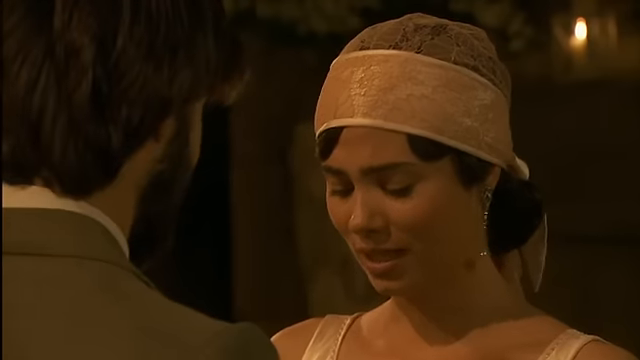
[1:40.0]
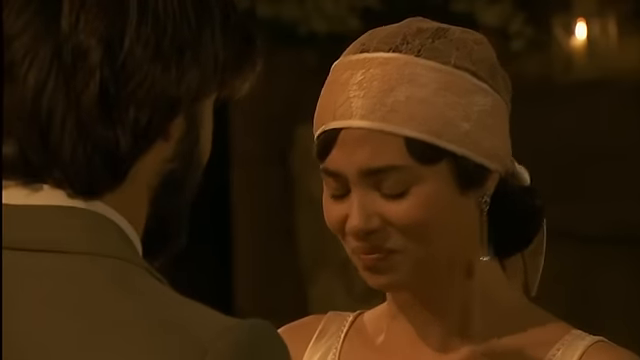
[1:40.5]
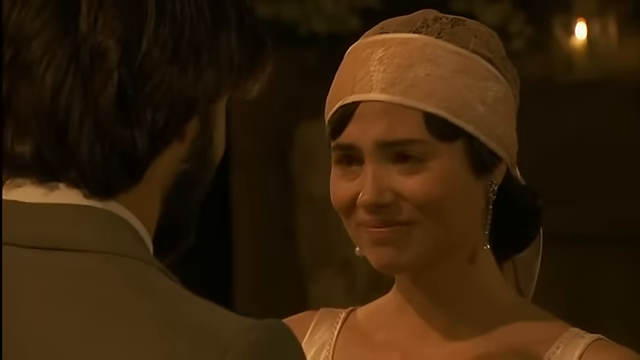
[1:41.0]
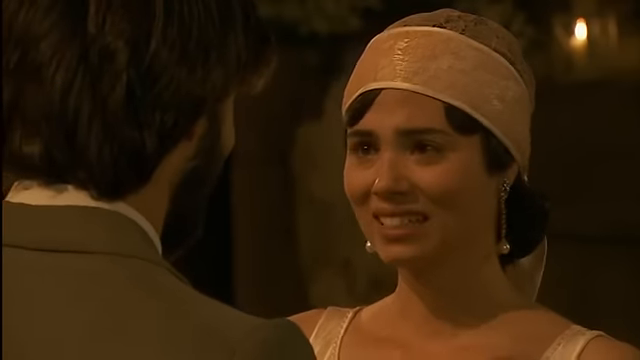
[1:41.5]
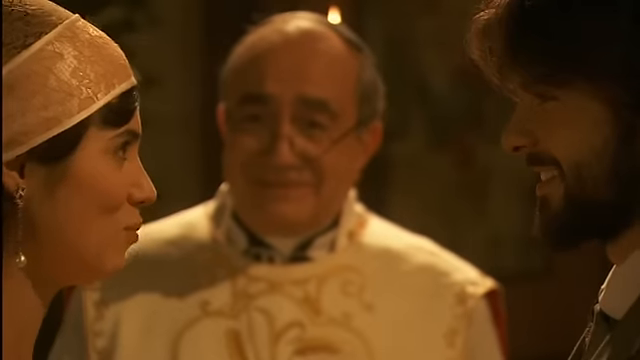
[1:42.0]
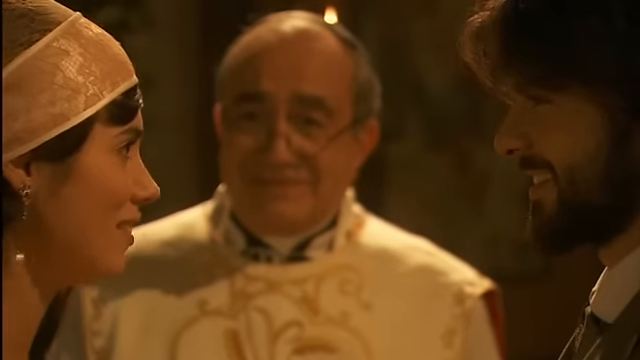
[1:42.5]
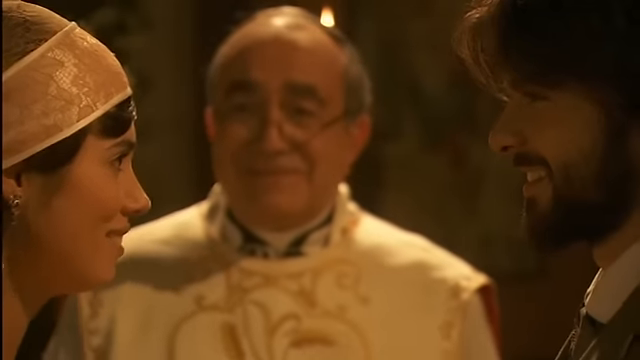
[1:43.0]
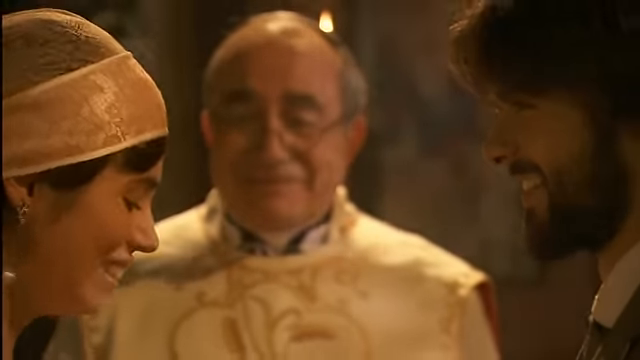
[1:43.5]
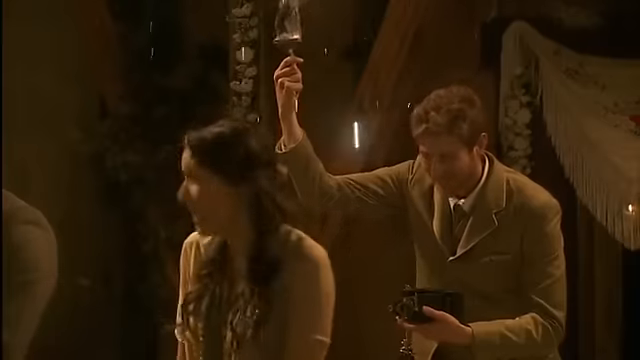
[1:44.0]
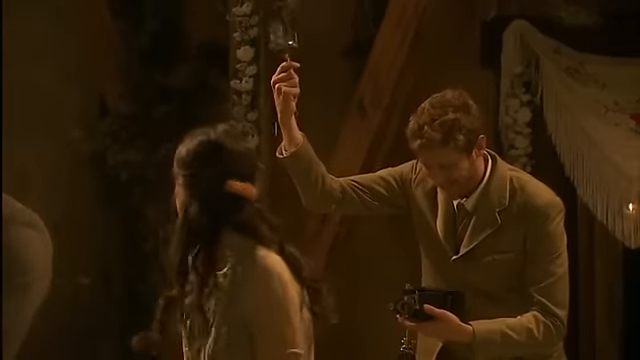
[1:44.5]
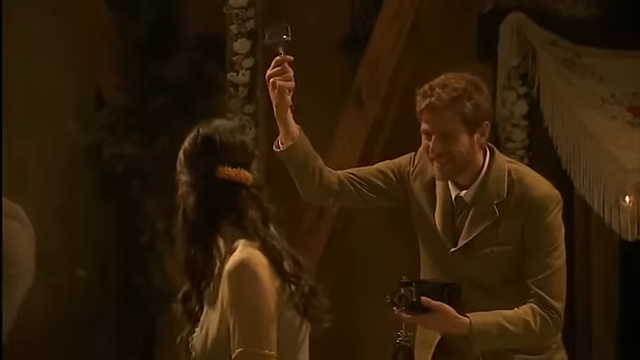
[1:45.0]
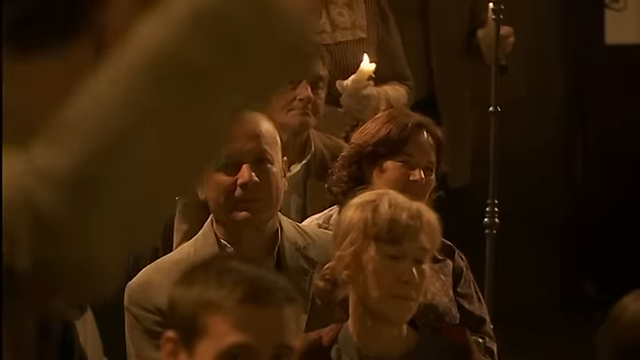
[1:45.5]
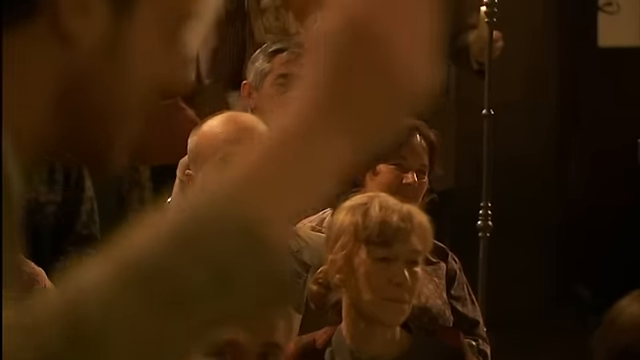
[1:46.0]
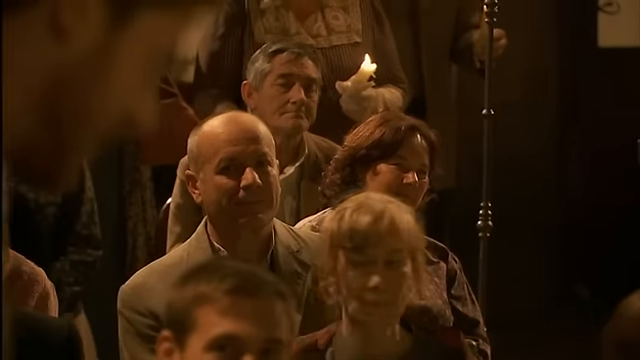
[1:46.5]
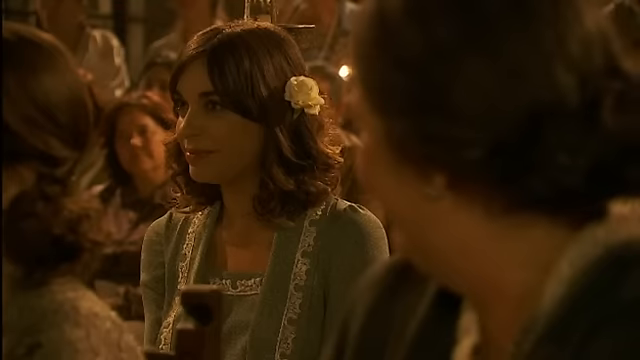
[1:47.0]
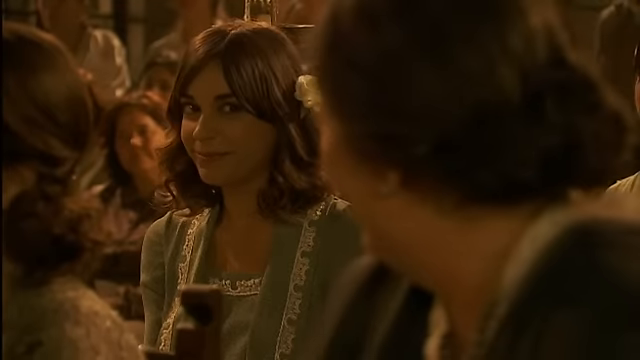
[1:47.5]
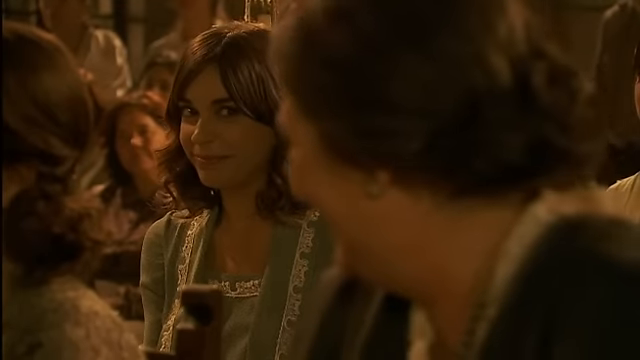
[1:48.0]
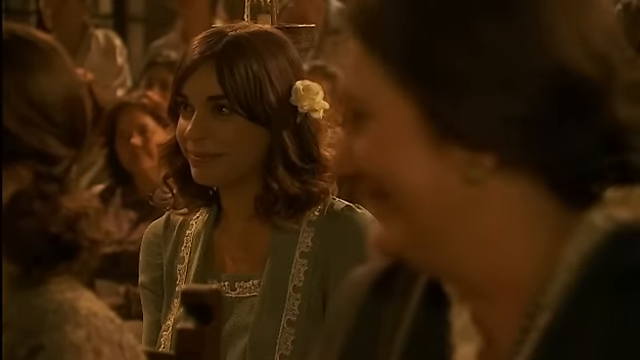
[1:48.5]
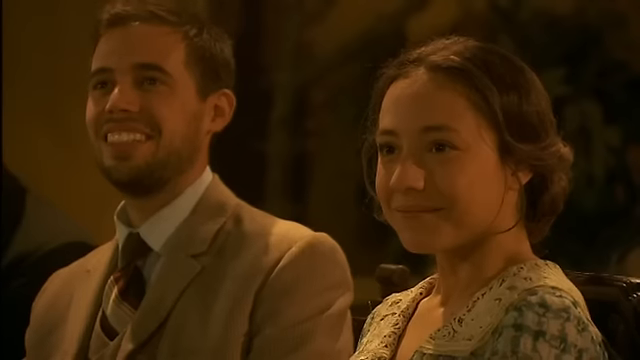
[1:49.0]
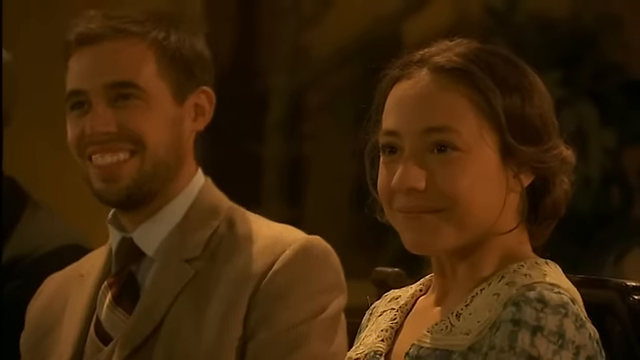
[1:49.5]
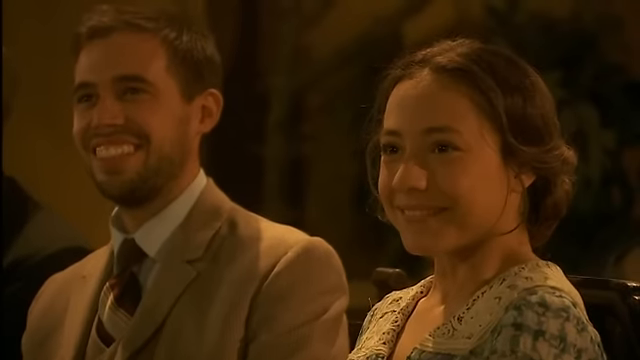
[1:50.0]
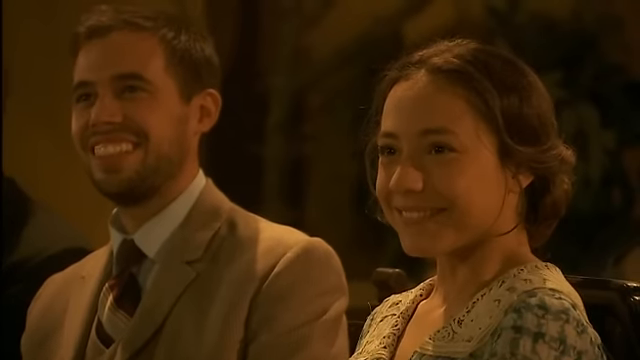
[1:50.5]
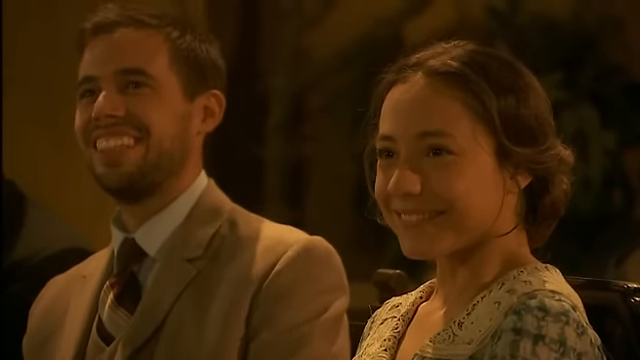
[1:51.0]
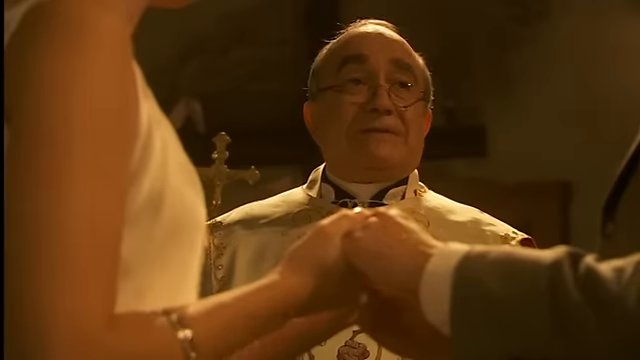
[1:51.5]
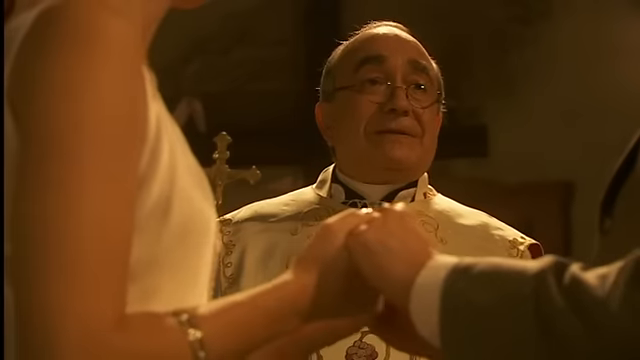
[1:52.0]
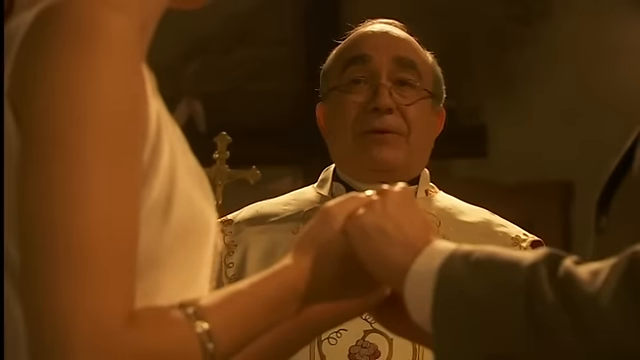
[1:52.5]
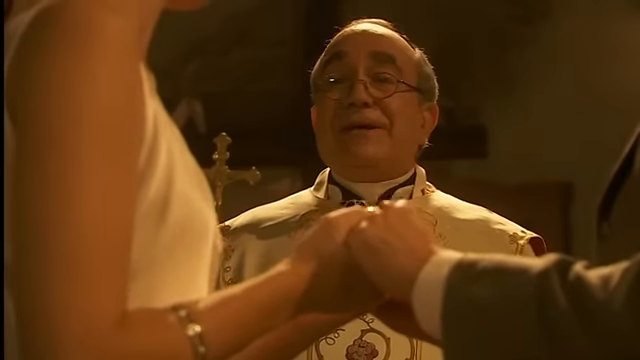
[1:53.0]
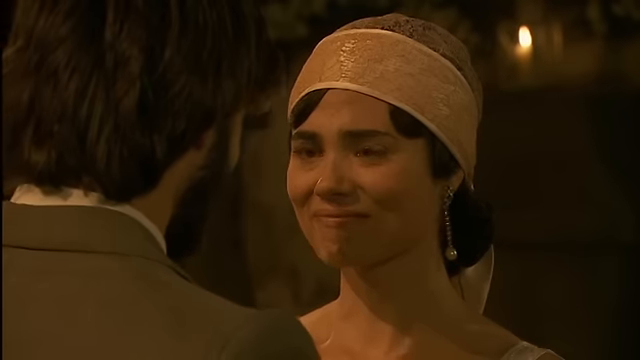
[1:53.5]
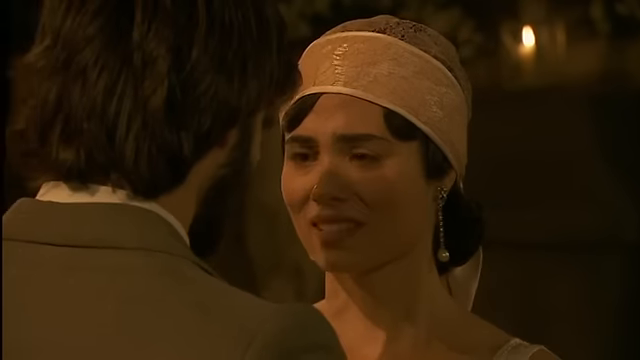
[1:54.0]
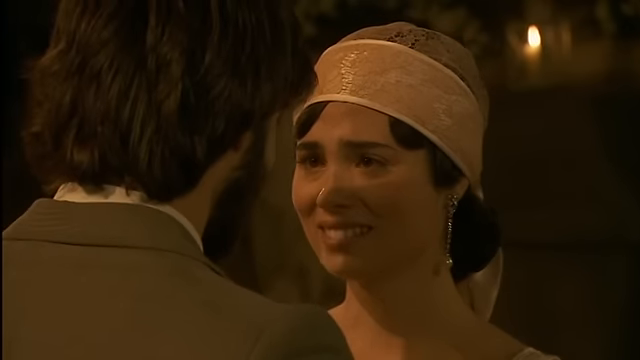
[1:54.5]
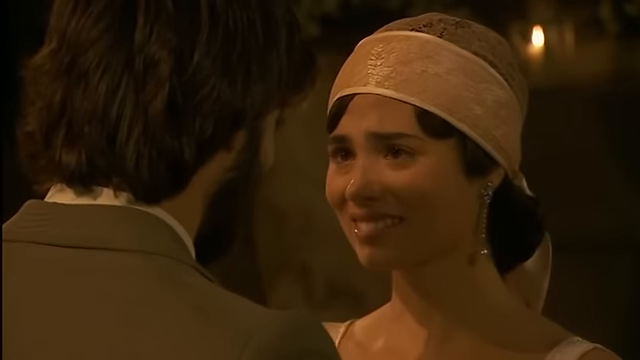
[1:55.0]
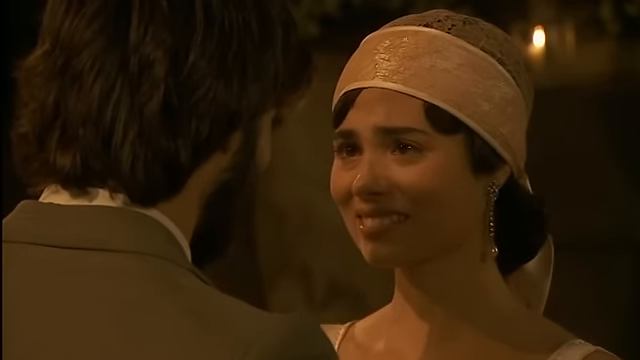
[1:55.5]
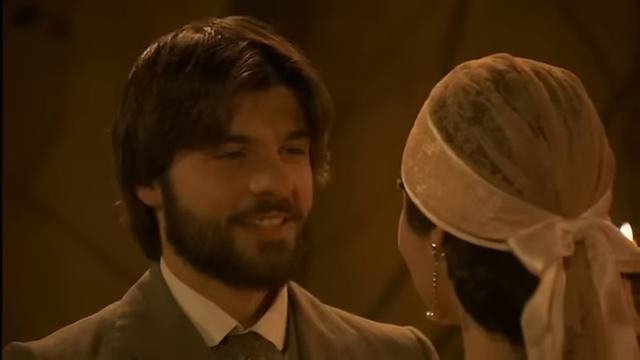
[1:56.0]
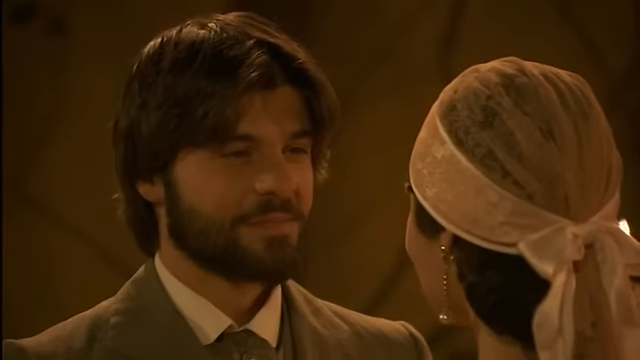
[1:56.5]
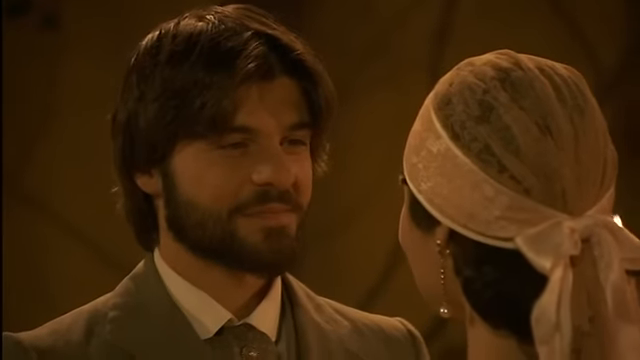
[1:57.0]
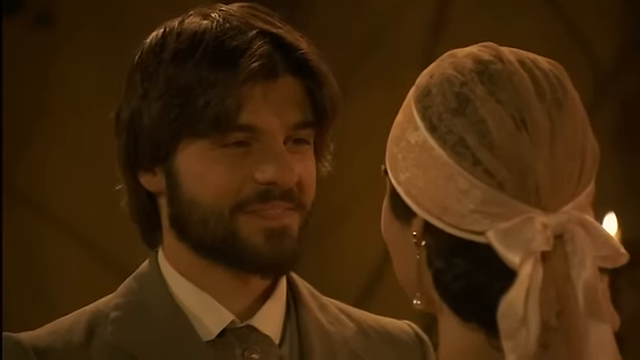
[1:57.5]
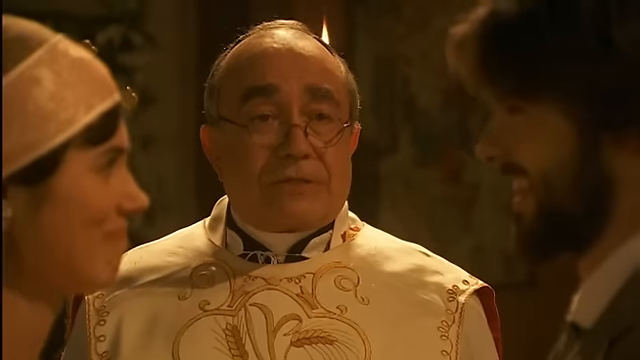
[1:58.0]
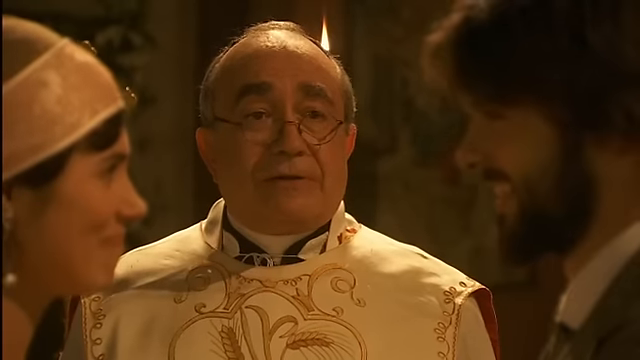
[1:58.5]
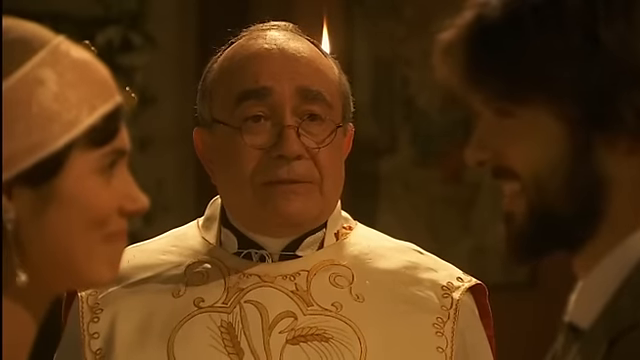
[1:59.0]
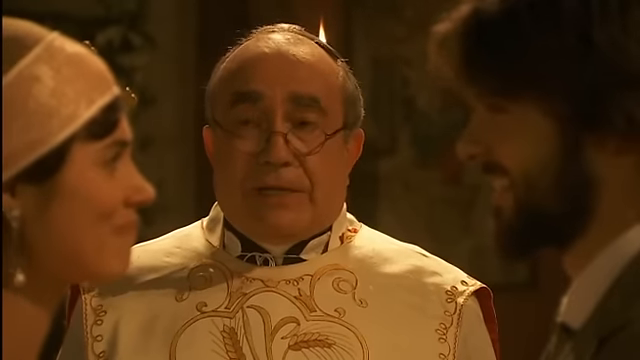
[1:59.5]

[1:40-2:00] The bride tears up while saying her vows to her husband. As she puts the ring on his finger, the perspective switches from the priest's angle to the audience's angle. A burst of light comes from the photographer's flash at the back of the church, a giant bright light that interrupts the emotions of the room, and everyone kind of starts laughing. The photographer is in front of the doorway at the back, in front of a shawl with white trim and some flowers, and seems to scare everybody with the pop. The shot goes to audience members looking on with love and admiration at the couple, then to the lady with the baby looking at the girl behind her with the flower in her hair, who was crying earlier. Next comes the younger couple seated in the back of the church, smiling on in admiration. The priest pronounces the couple husband and wife in front of their family and friends, and the shot ends with the bride and groom staring lovingly into each other's eyes.